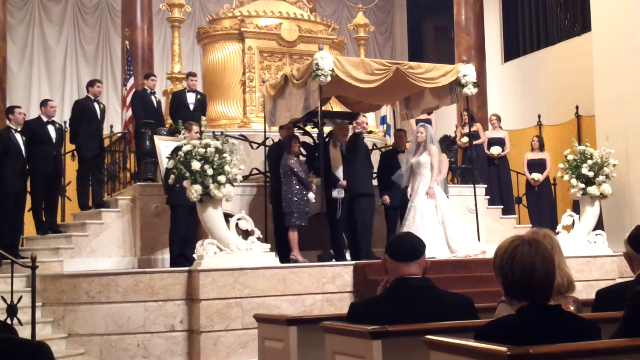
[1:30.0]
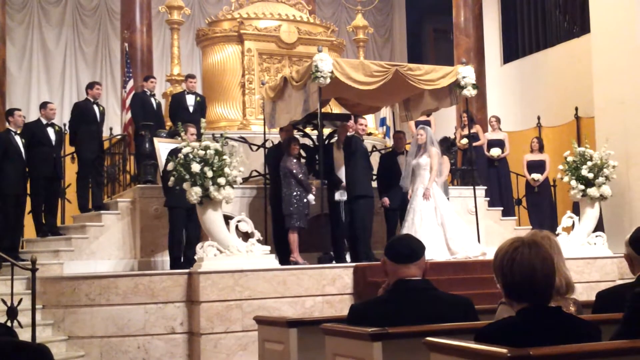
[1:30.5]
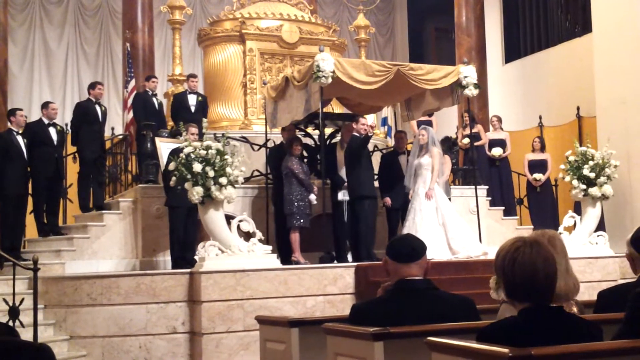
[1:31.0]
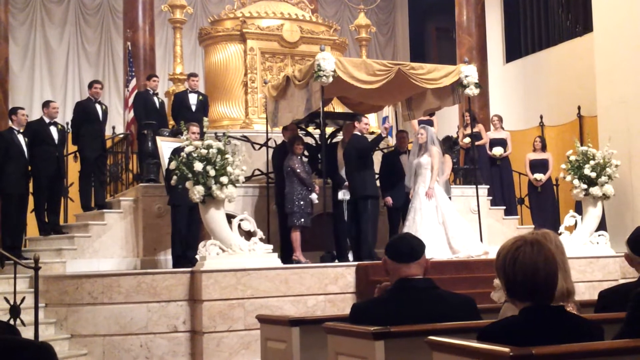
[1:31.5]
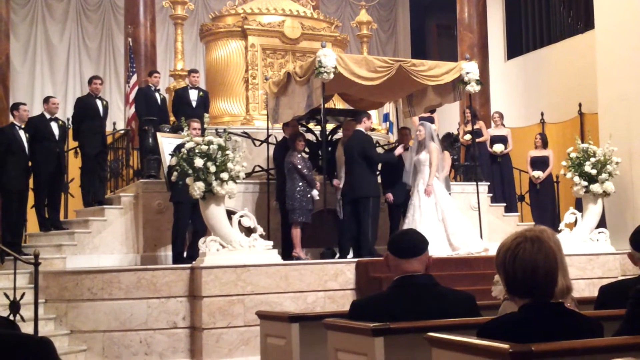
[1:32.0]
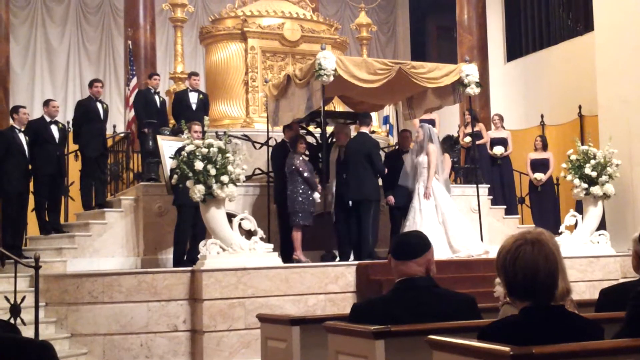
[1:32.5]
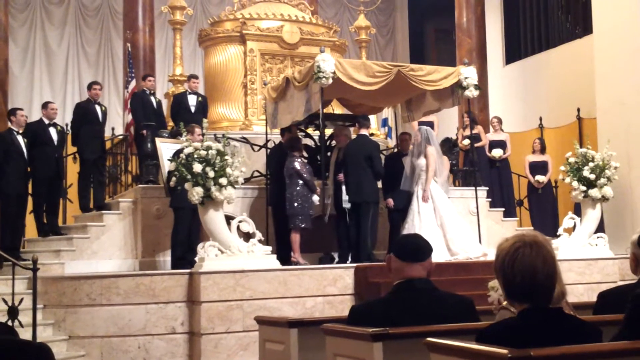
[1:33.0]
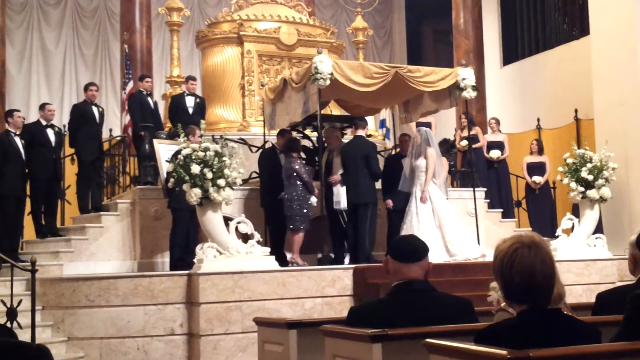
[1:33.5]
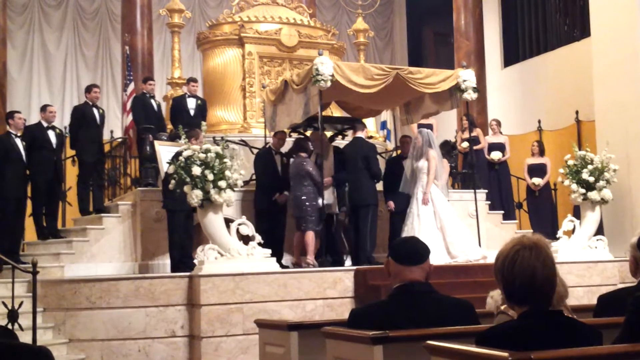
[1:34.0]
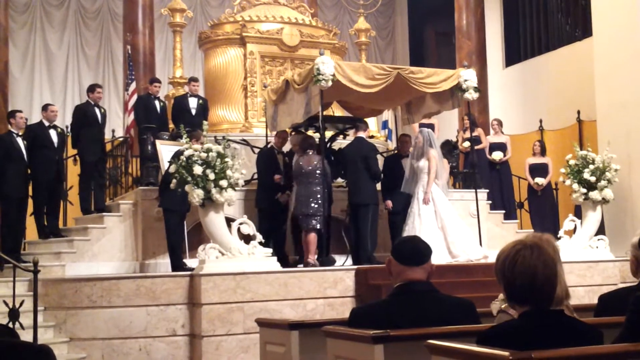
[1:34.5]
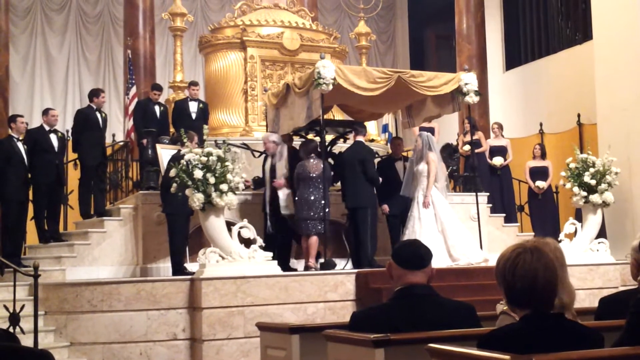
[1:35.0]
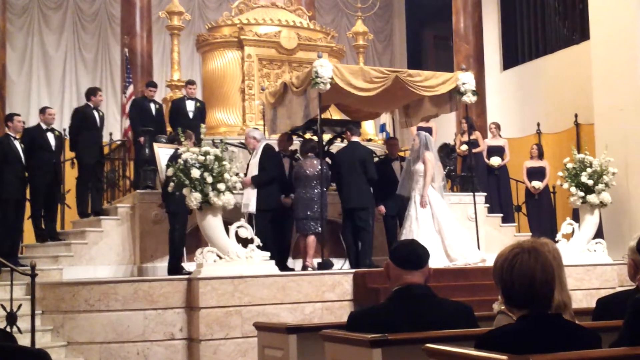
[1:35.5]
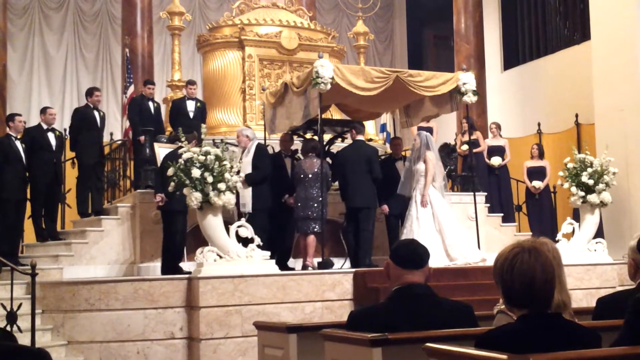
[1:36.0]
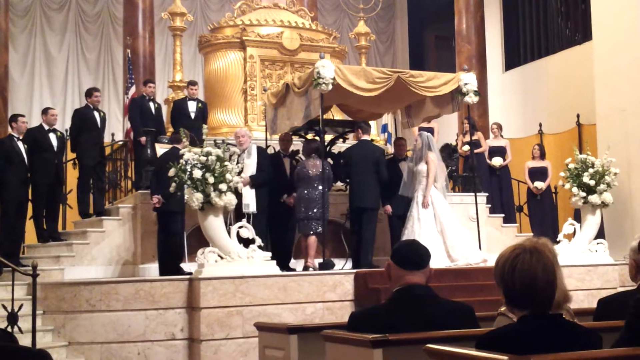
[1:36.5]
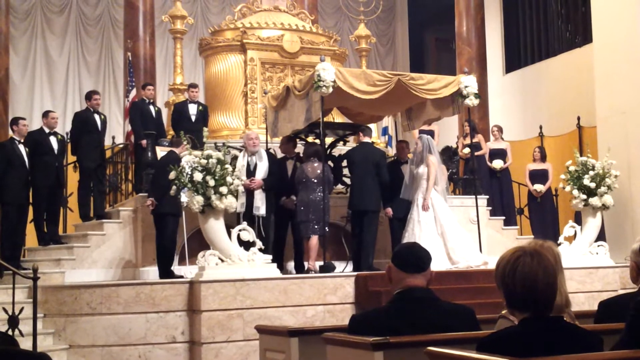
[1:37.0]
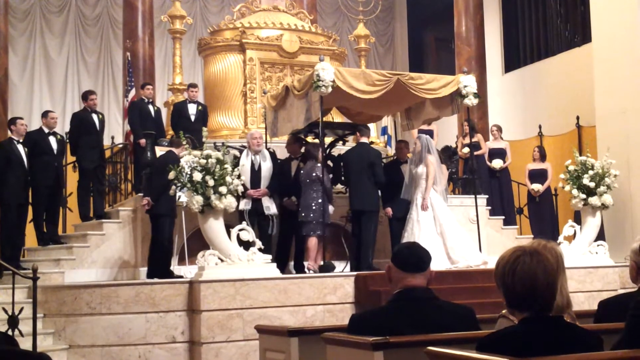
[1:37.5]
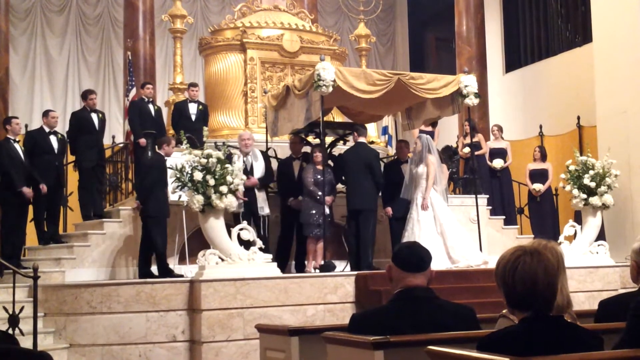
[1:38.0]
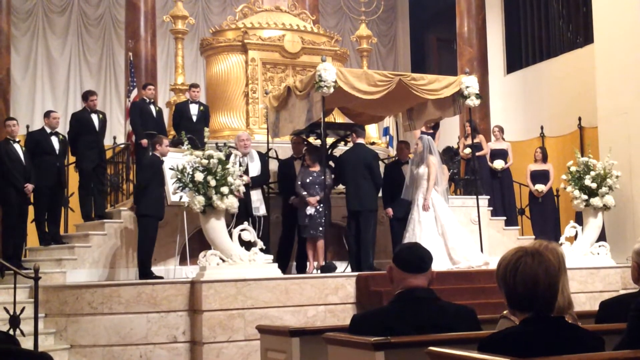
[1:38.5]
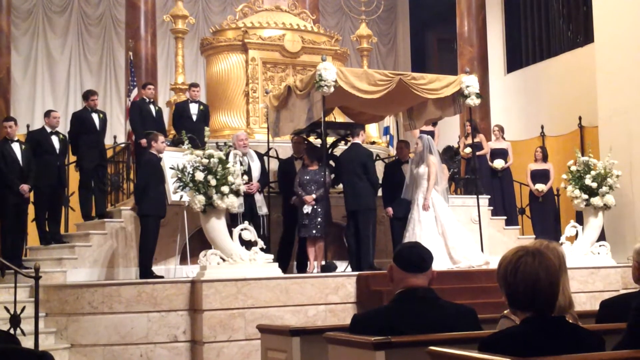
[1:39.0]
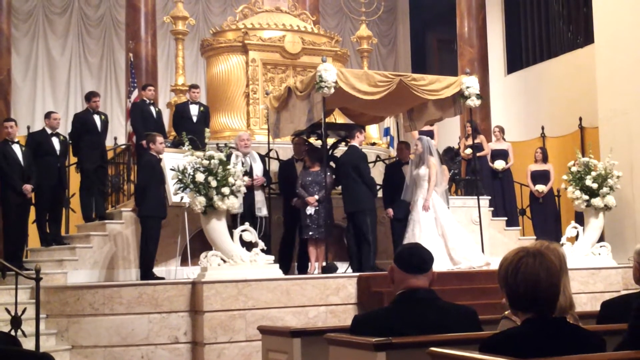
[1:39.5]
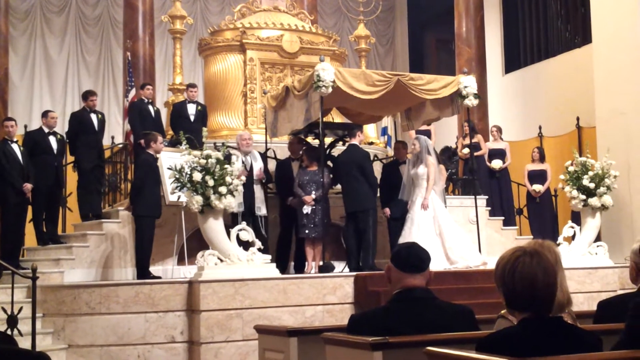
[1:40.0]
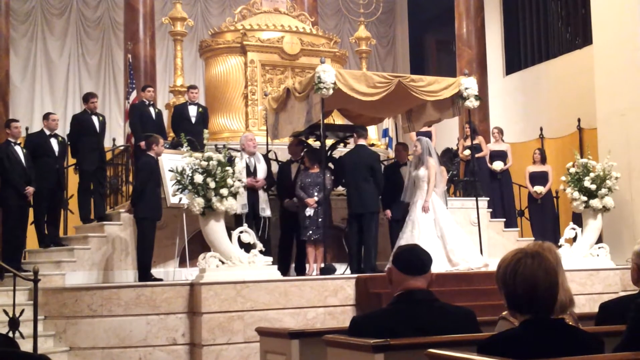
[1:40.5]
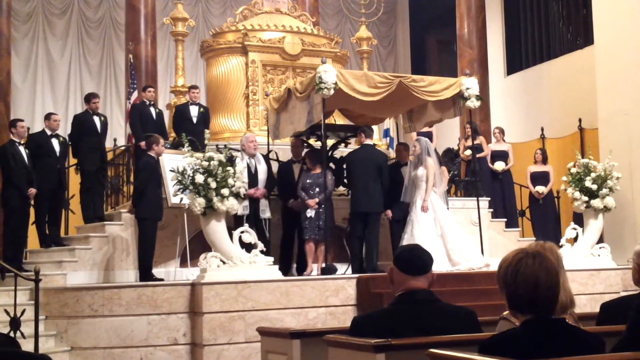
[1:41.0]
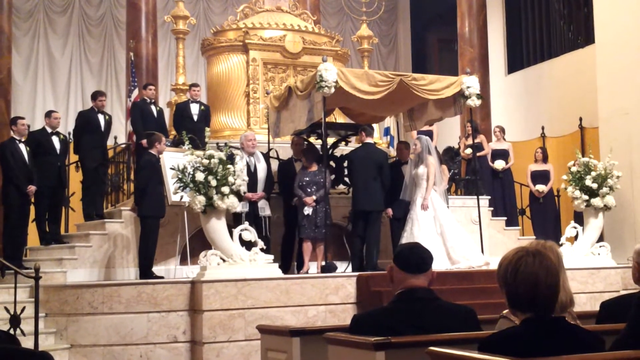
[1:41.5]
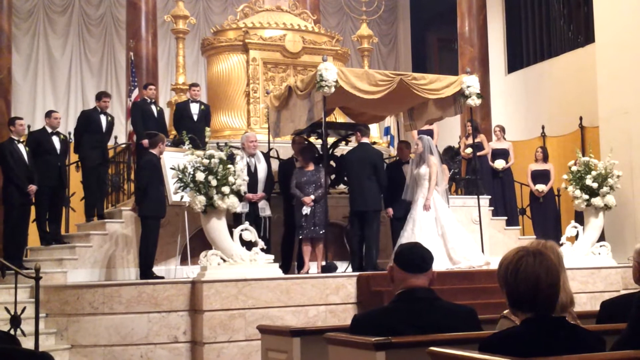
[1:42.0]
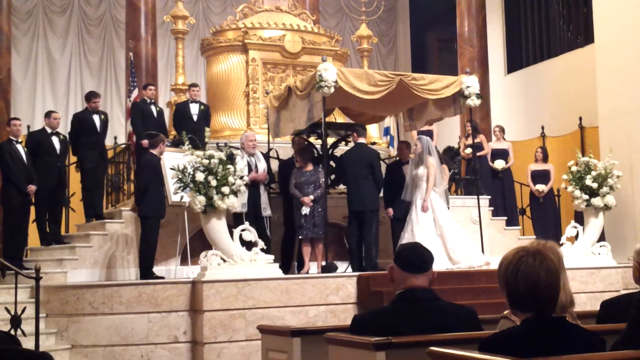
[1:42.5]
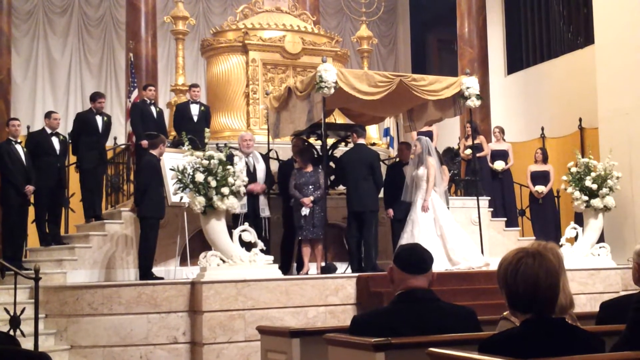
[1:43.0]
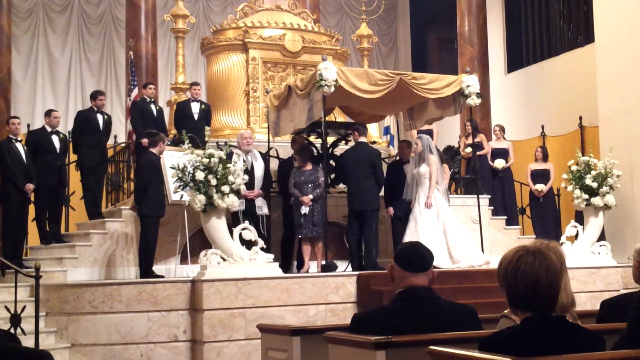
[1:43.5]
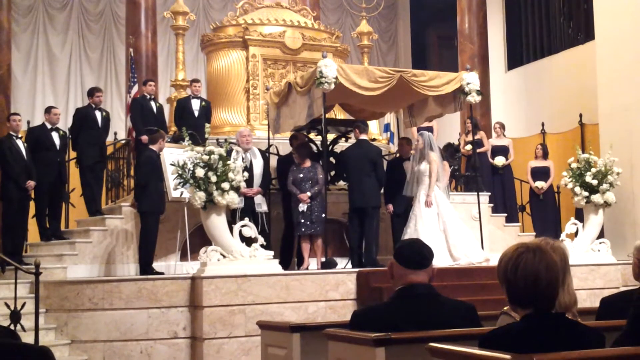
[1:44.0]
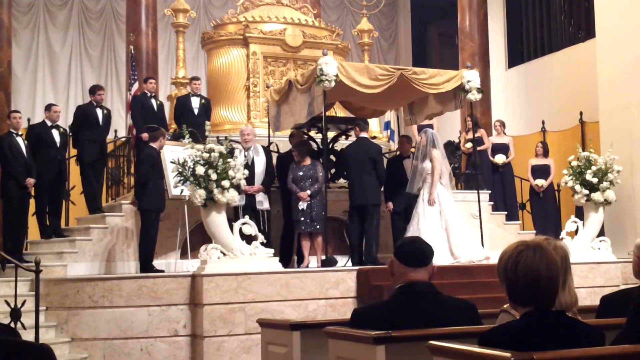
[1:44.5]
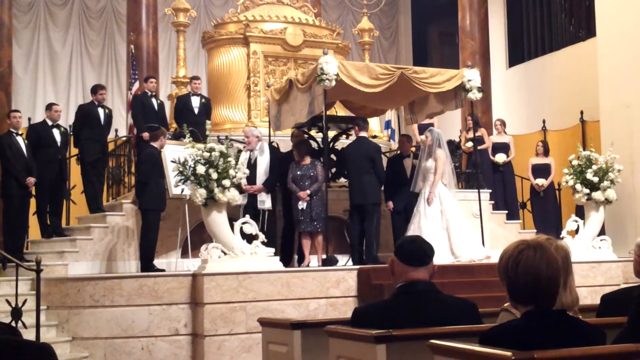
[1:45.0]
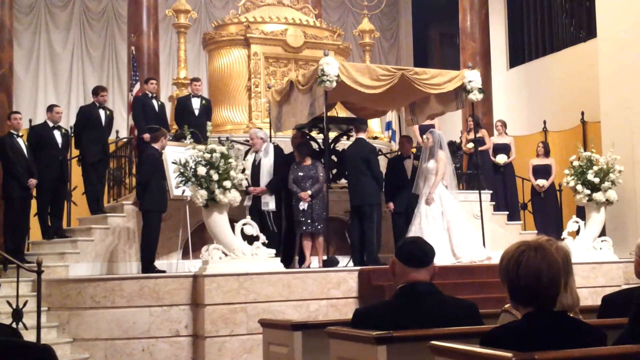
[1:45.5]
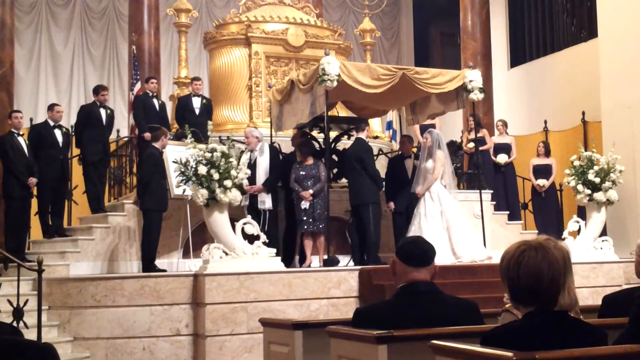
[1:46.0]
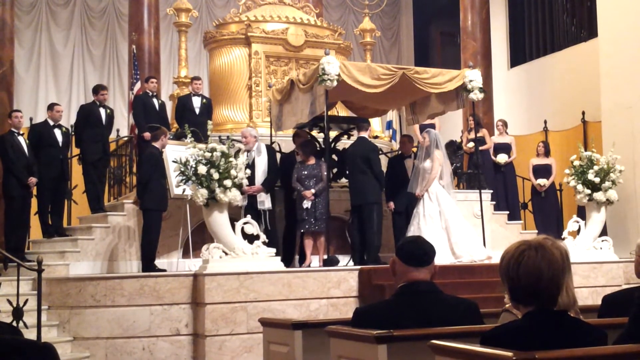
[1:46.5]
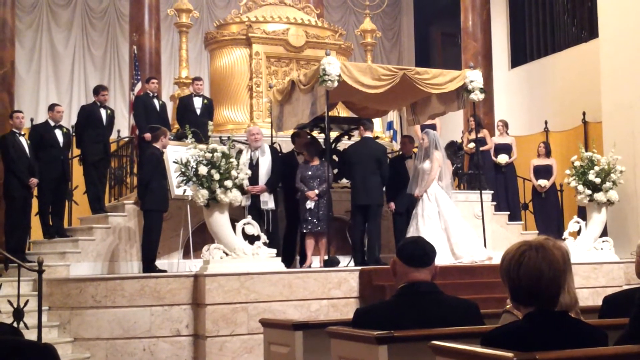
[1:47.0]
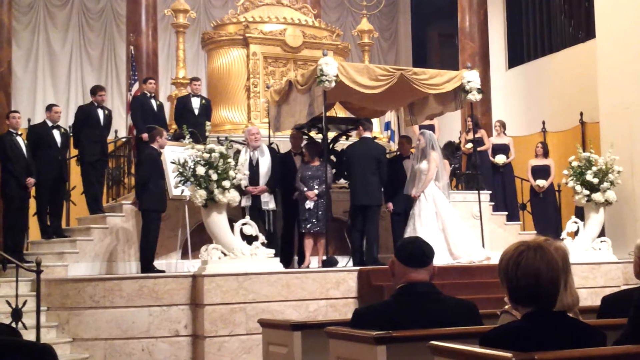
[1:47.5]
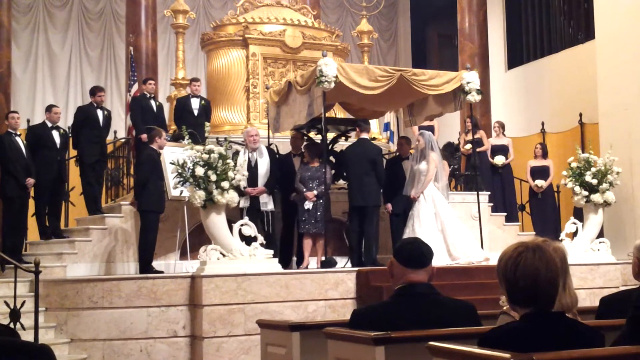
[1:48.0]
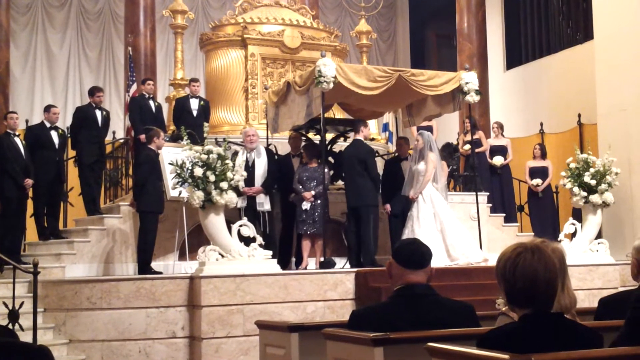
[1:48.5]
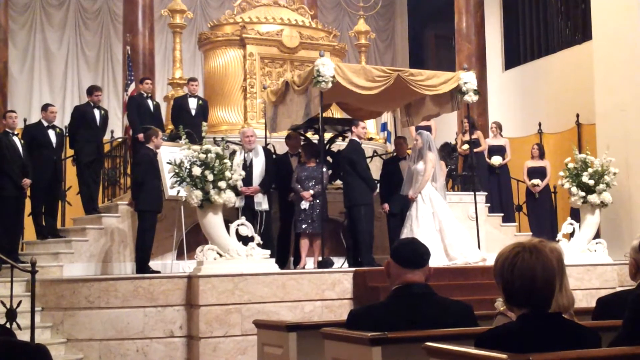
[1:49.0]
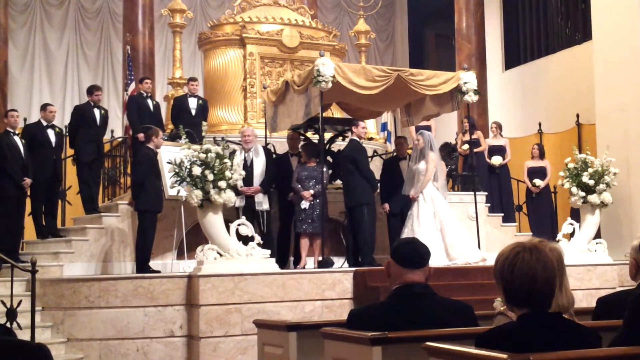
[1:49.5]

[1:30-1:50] The wedding ceremony in the church is seen from behind a few pews facing the altar, with a few people in the pews facing the altar. There is a red carpeted floor, with stone or marble stairs leading up to the altar. Stairs lead up and back off to the sides of the altar, with the groomsmen on the left and the bridesmaids on the right. The altar has a canopy with golden fabric and two elegant vases with bouquets of flowers off to the sides. Many people are under the canopy: the minister facing the bride and groom, the bride and groom in traditional attire facing each other, and a few other people, likely the witnesses. The groom turns his head towards the pews, hand outstretched, pointing a finger in the air. The minister walks out from under the canopy towards one of the groomsmen, likely the best man, saying something and speaking to the crowd.